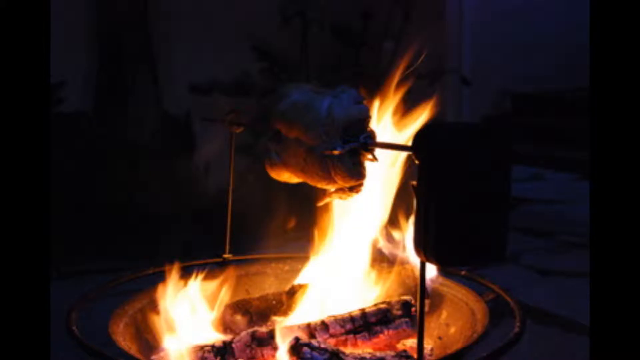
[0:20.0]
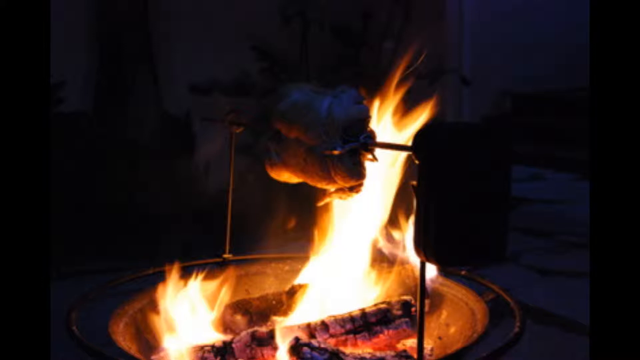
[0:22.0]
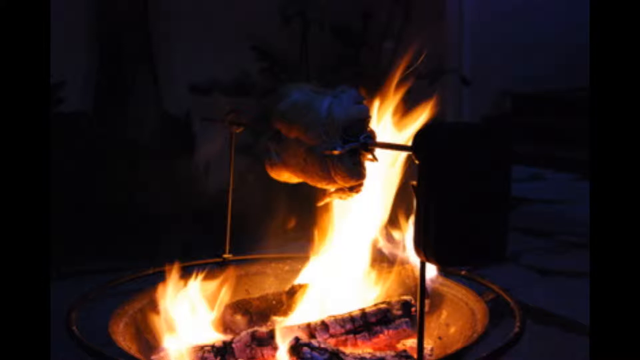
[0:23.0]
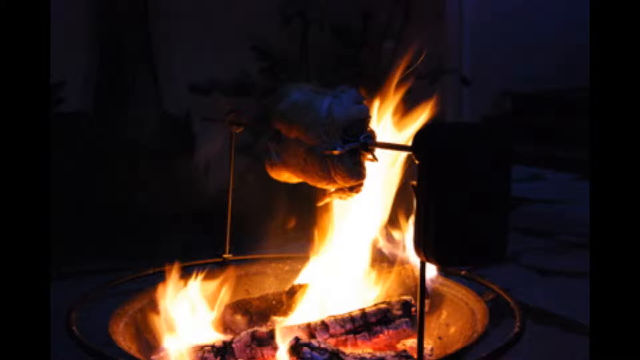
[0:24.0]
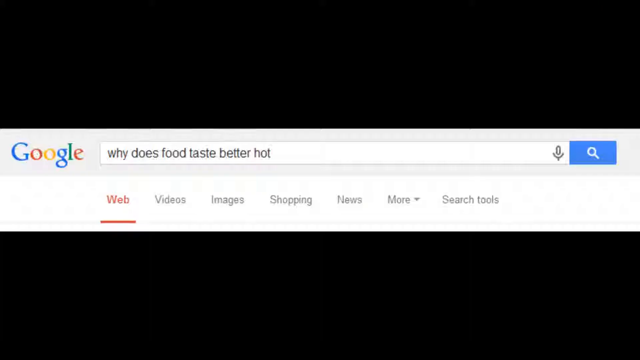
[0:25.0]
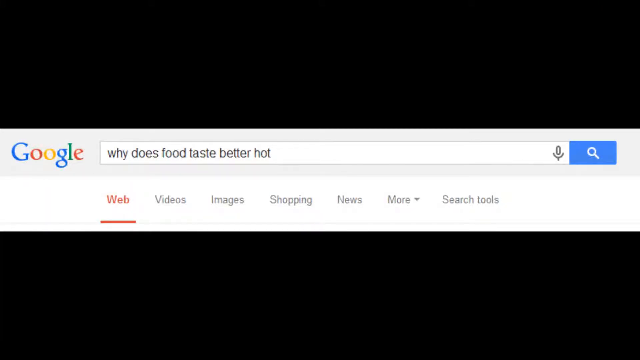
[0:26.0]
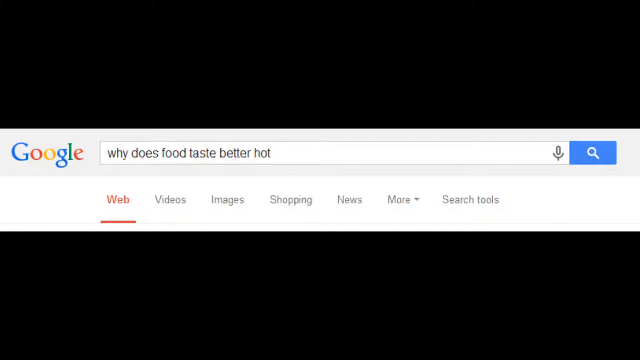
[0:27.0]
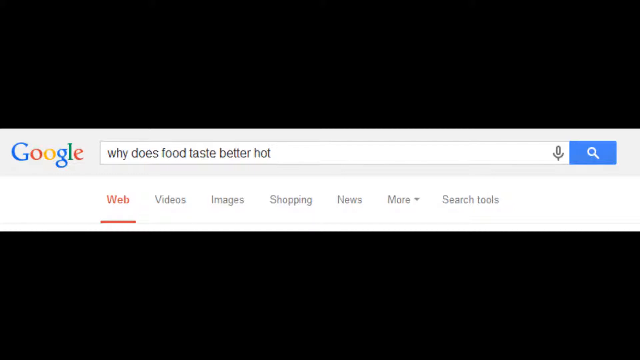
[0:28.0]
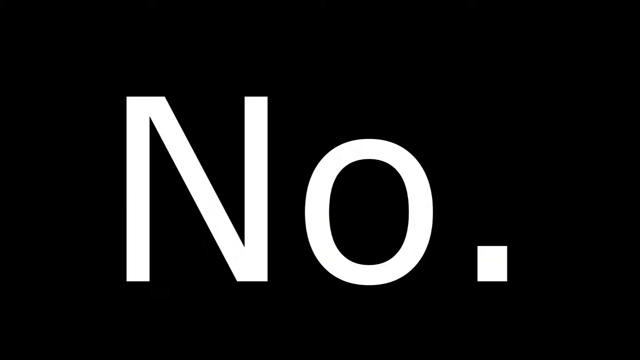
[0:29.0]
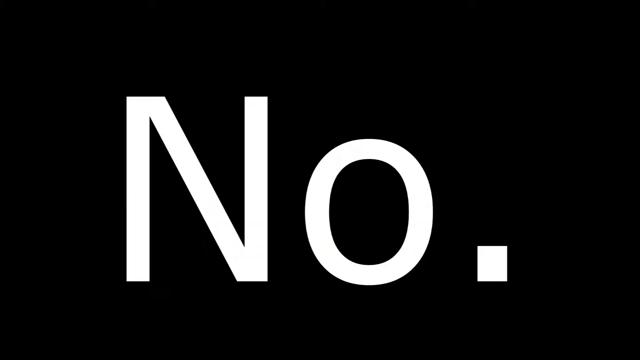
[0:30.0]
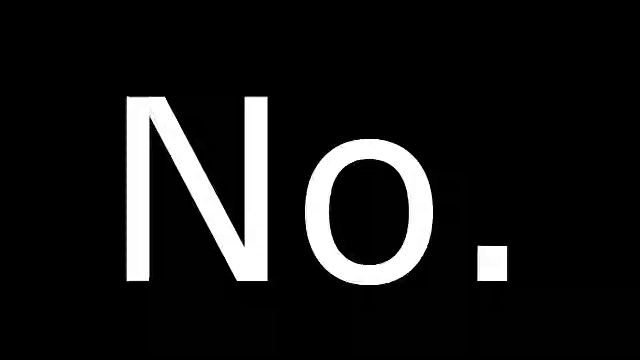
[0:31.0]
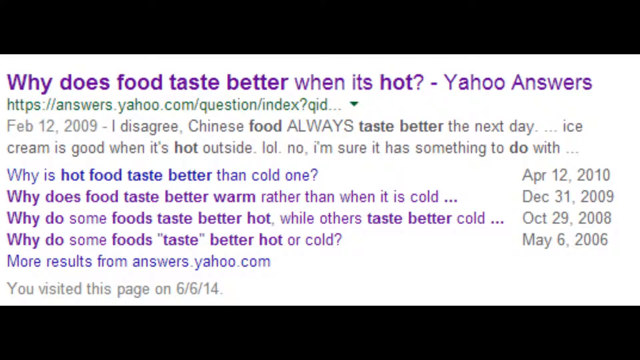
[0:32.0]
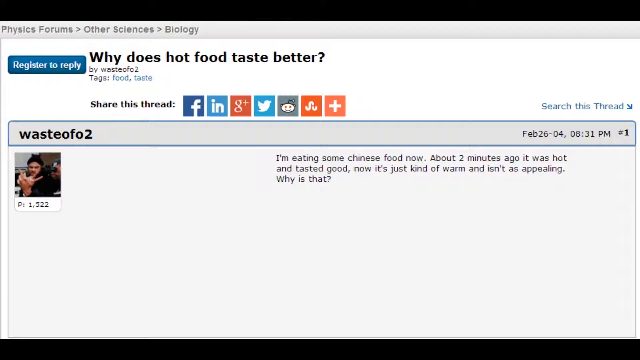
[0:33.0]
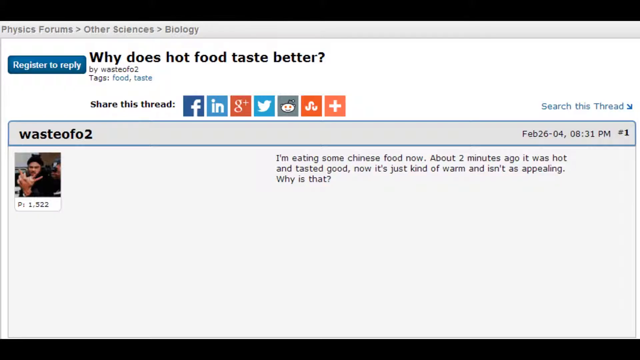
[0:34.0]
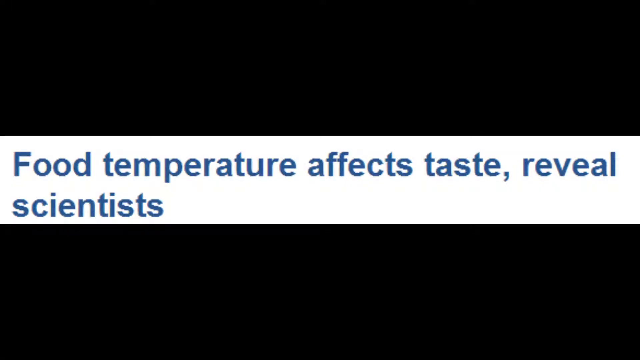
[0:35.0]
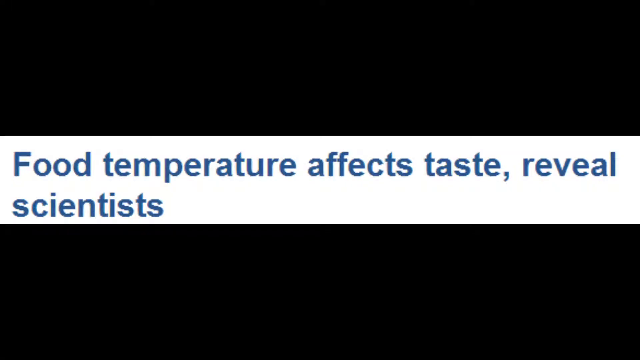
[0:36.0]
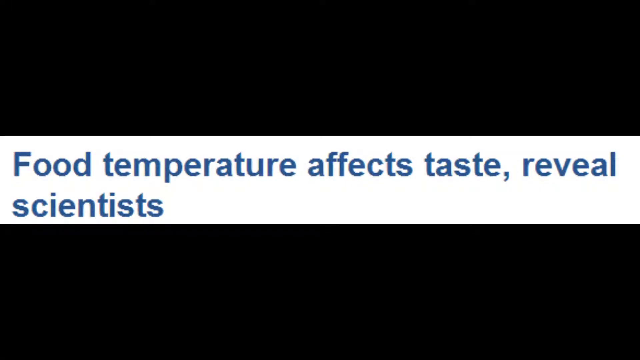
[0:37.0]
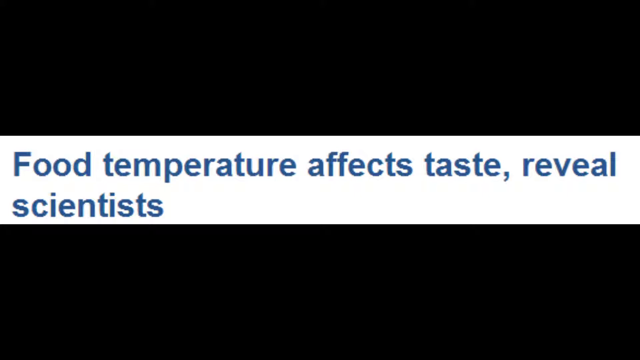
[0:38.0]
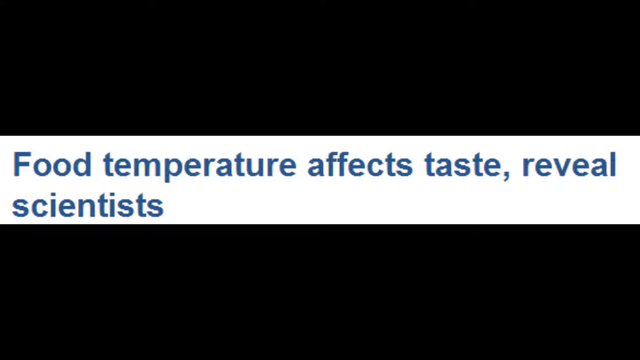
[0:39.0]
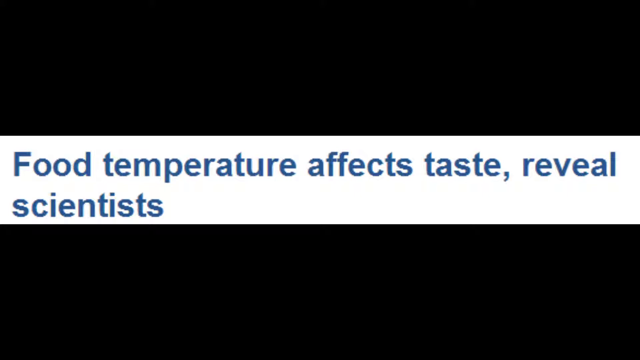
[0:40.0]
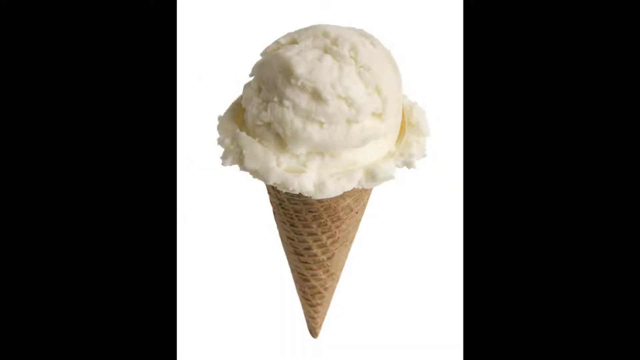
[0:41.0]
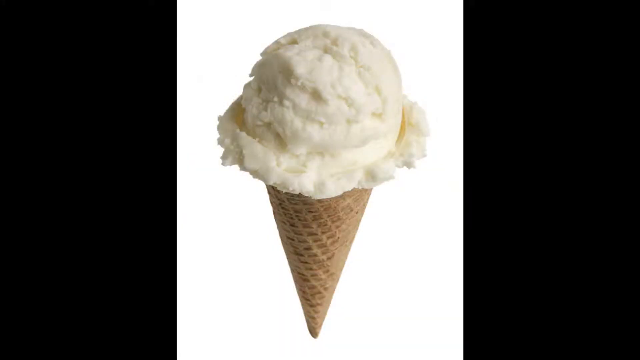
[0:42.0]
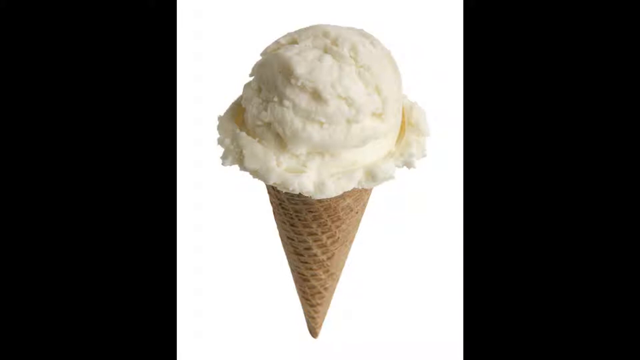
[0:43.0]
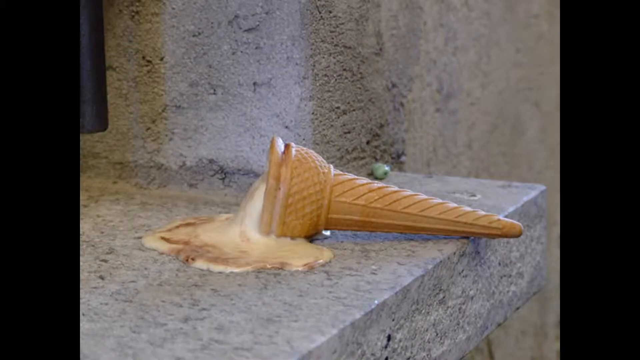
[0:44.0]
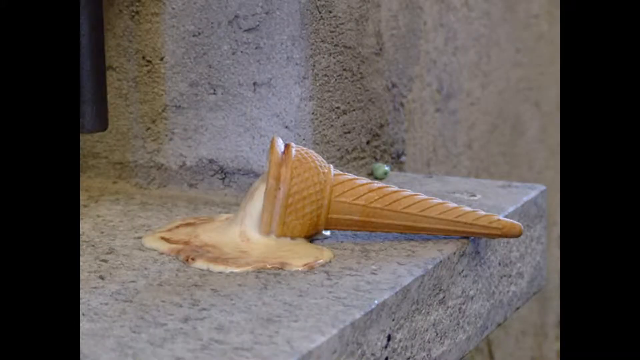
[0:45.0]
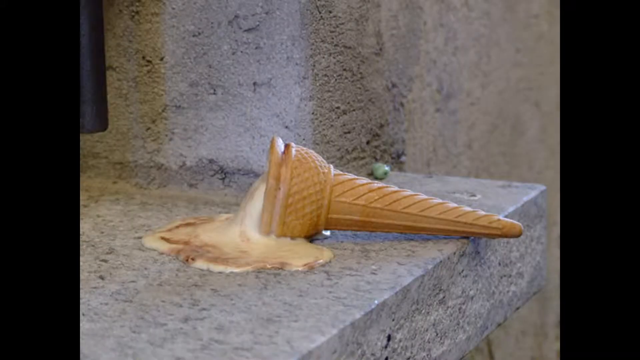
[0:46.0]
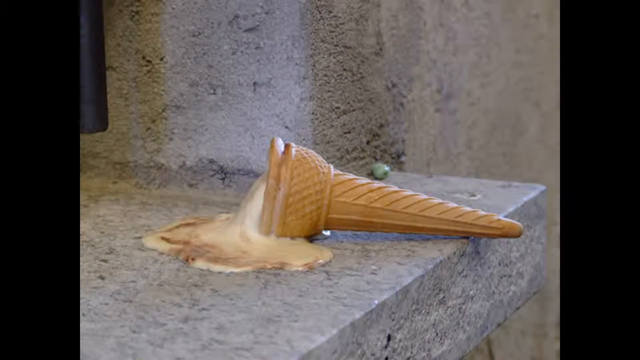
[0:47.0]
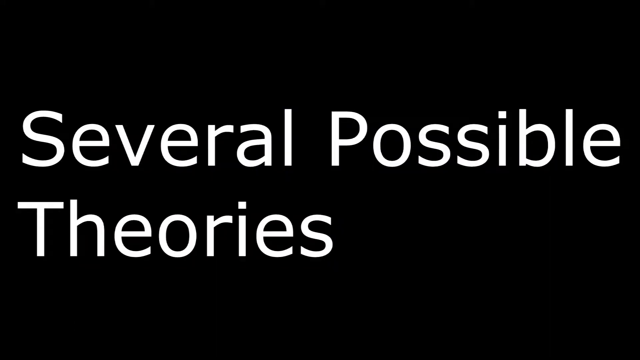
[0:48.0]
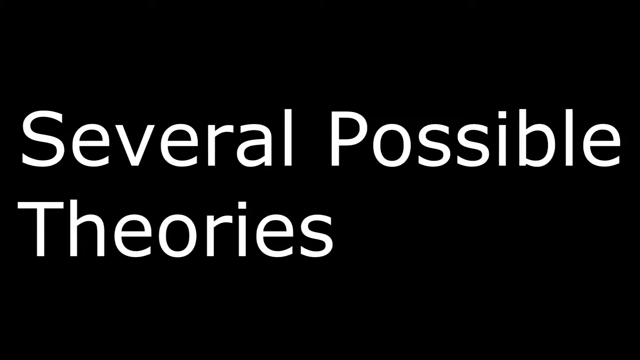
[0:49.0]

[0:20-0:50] What looks like a chicken or a turkey on a spit is over a towering flame. A Google search asks "why does food taste better", and the text says "no." The query, "why does food taste better when it's hot", is at Yahoo Answers. Someone says, "I disagree. Chinese food always tastes better the next day. Ice cream is good when it's hot outside. LOL, no. I'm sure it has something to do with..." and the text is cut off. Someone else asks the same question, and it shows that you have to register to reply. The person's name is given as "Waste of Two", and the post says, "I'm eating some Chinese food now. About two minutes ago it was hot and tasted good. Now it isn't as appealing. Why is that?" An answer says, "food temperature affects taste. Reveal scientists." A picture of a melted ice cream cone follows, and then the text "several possible theories".